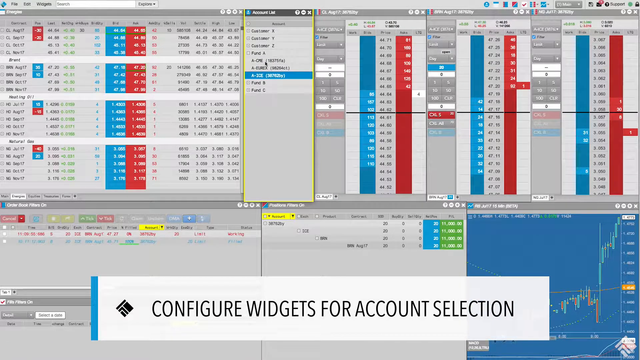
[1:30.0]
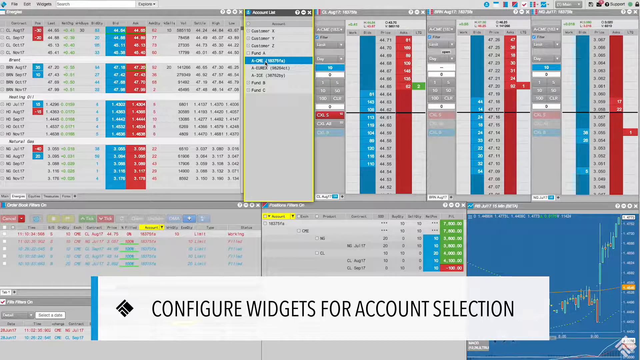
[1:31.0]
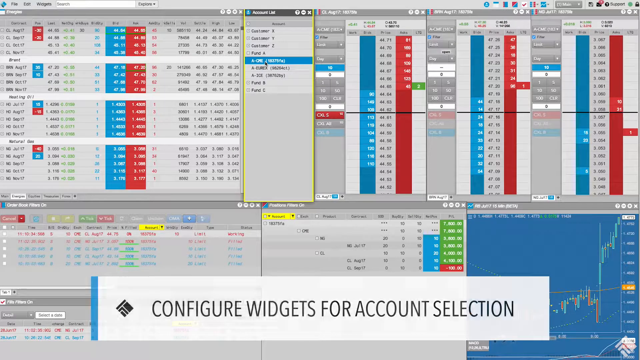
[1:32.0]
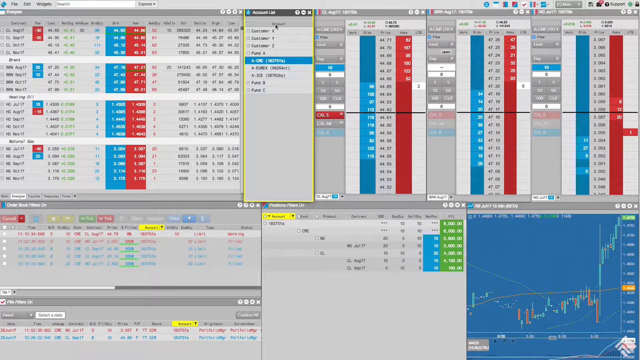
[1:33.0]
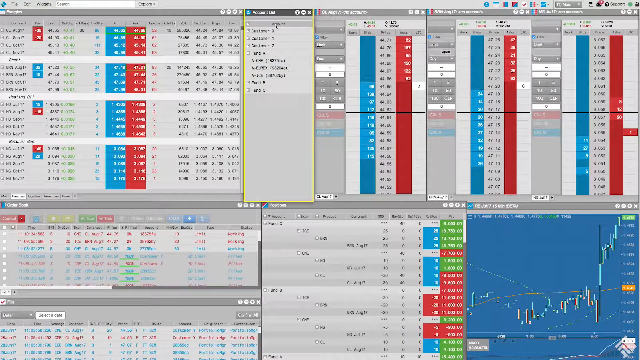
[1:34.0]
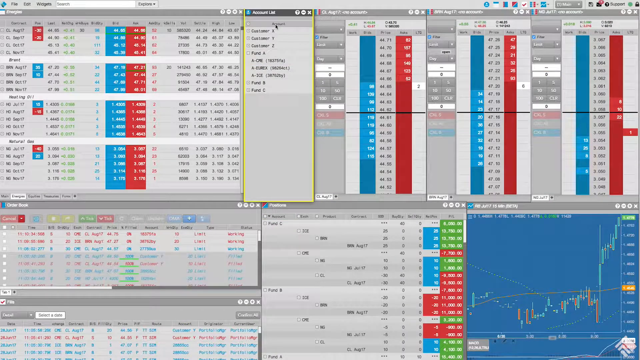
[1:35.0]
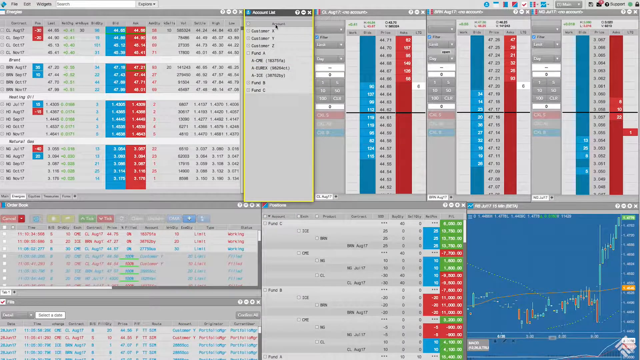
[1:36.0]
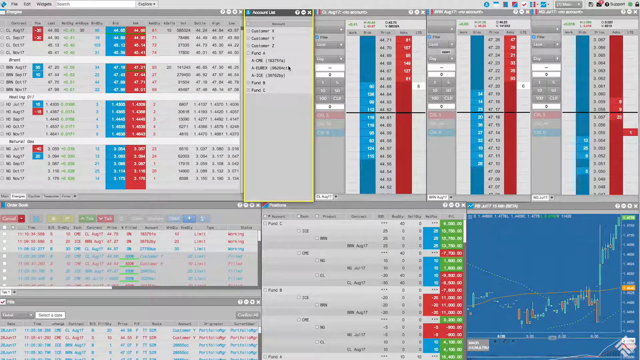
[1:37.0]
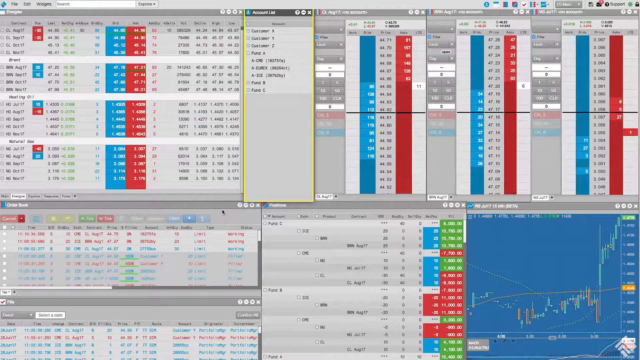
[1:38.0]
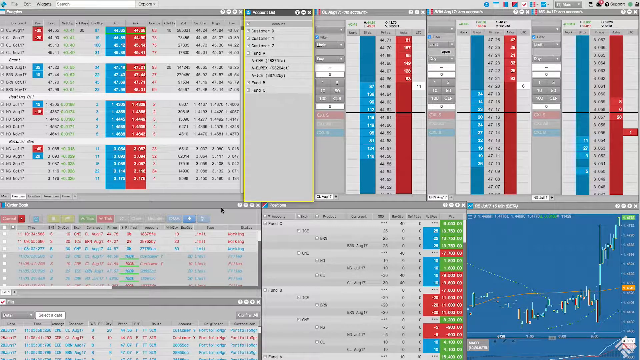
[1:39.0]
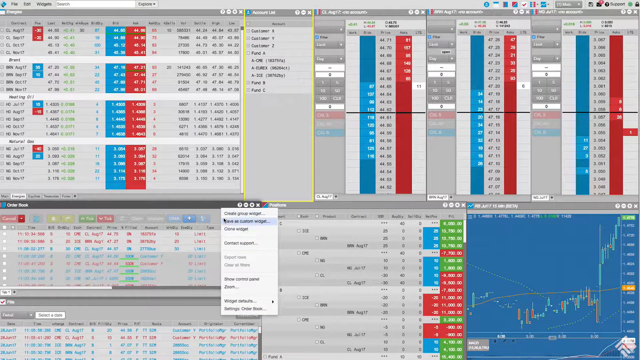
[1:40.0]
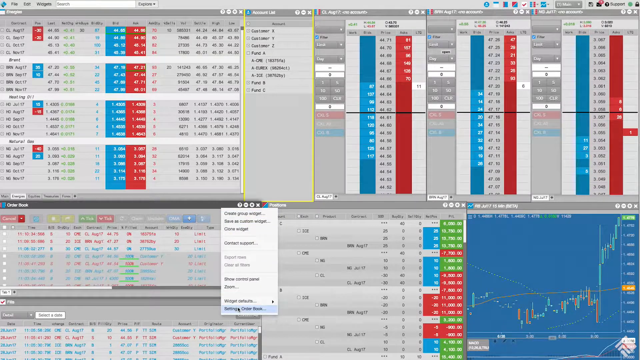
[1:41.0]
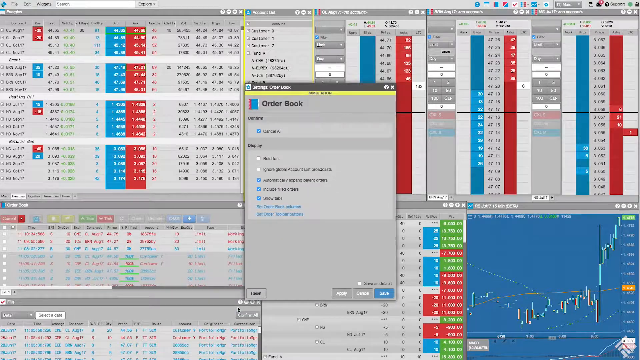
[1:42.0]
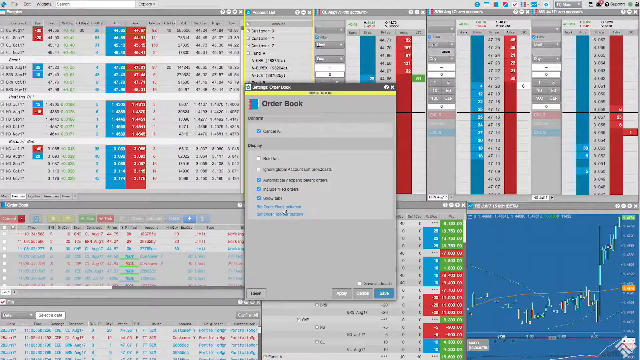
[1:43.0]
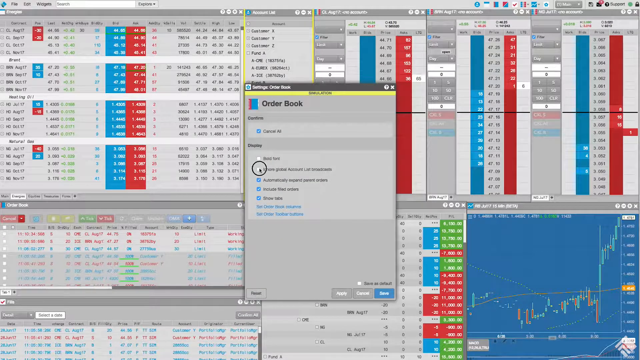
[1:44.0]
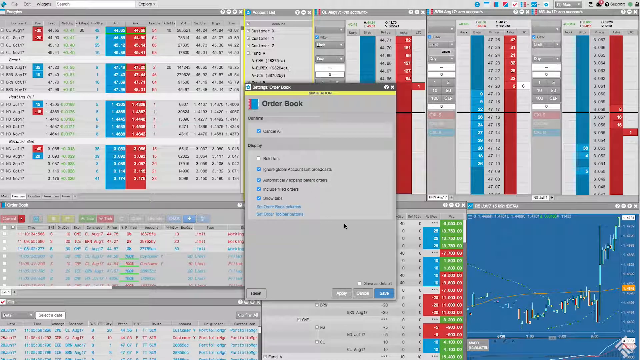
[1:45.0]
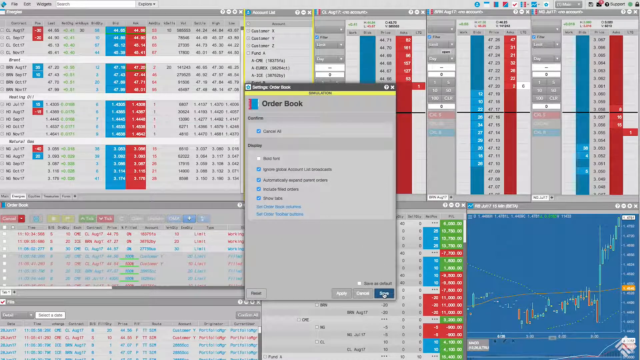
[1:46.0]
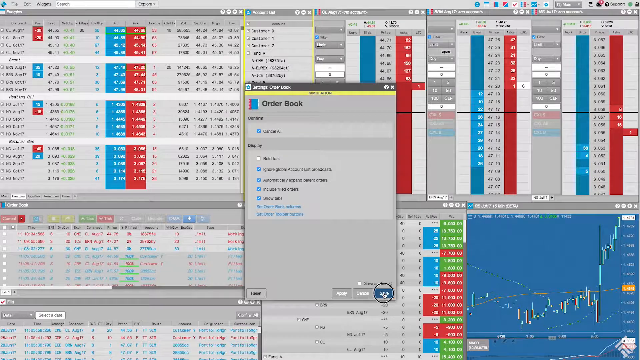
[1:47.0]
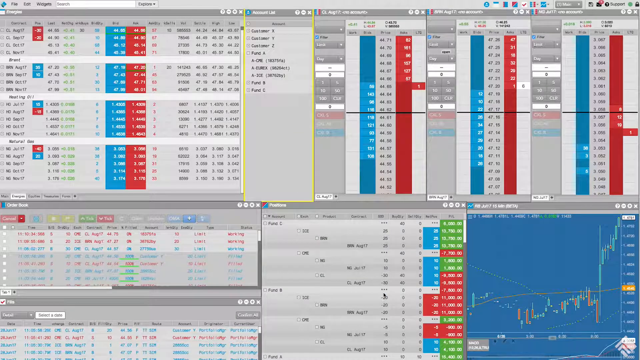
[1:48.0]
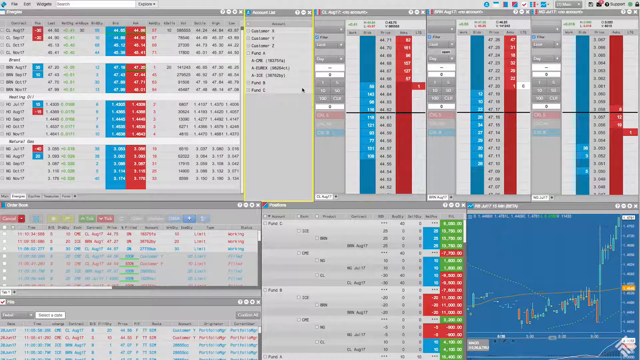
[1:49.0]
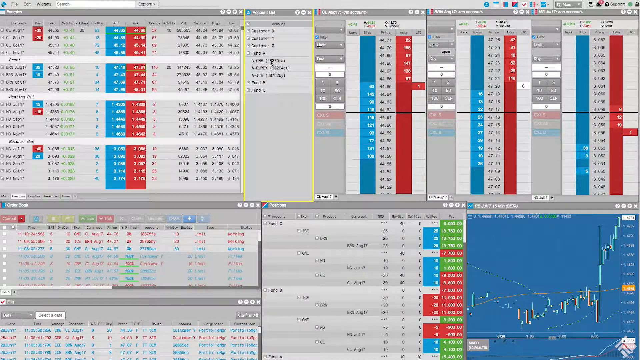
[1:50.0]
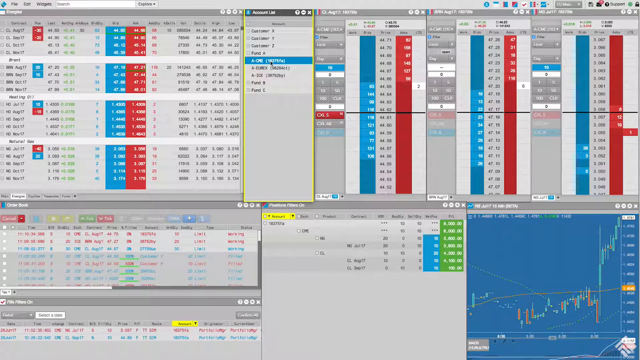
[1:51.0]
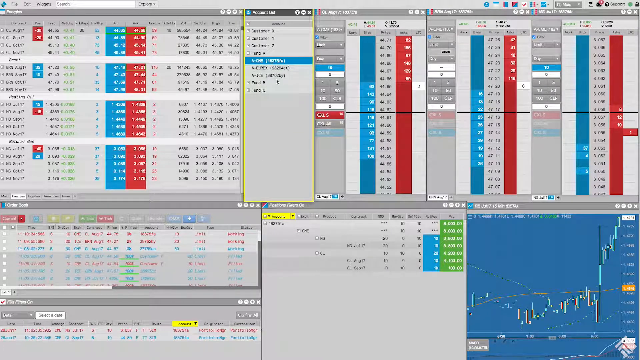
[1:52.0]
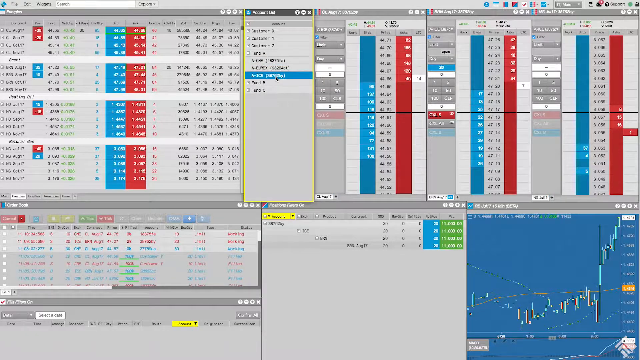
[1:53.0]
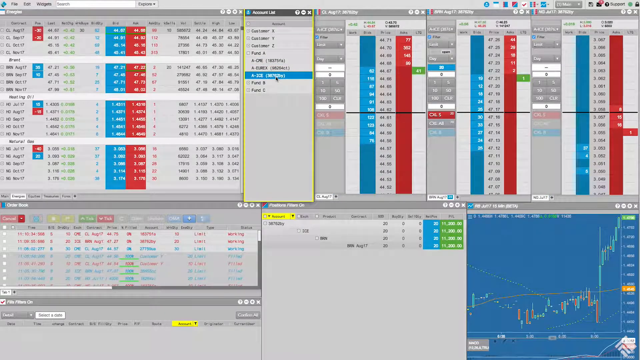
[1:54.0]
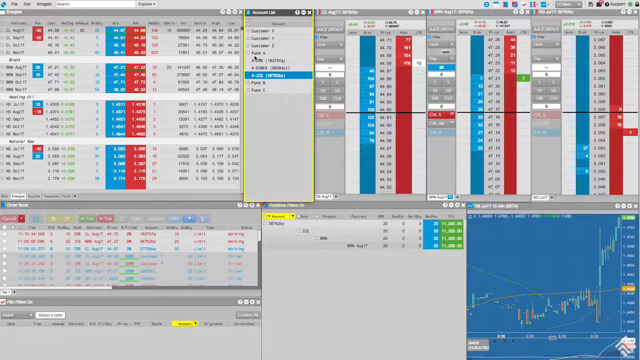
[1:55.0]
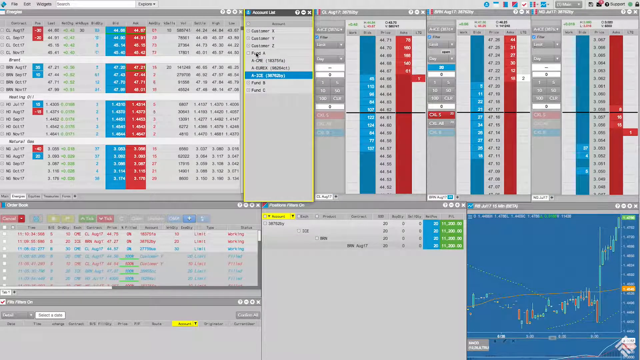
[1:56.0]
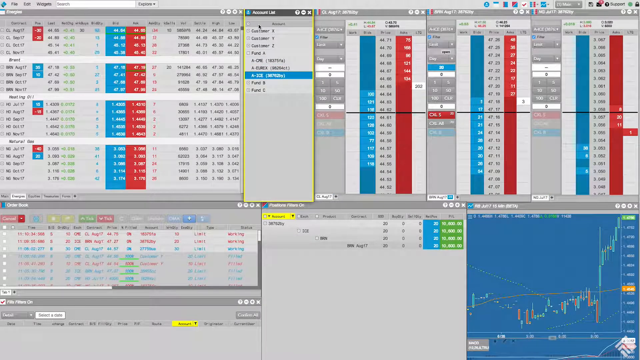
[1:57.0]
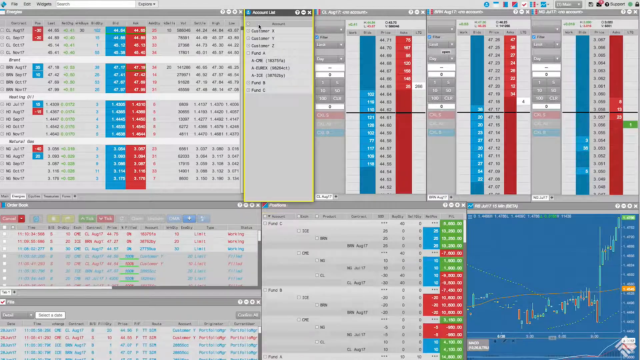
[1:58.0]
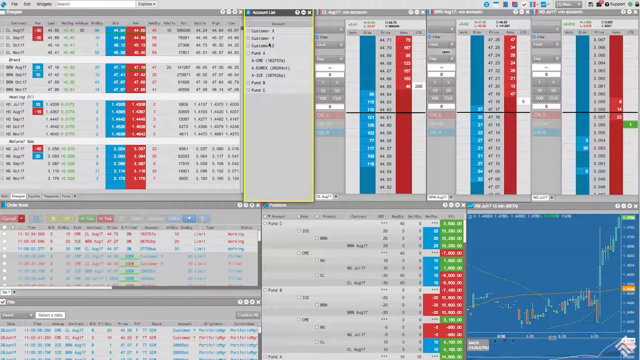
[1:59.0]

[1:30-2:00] A screen capture of someone's computer shows multiple windows open, apparently running the same sort of application, which appears to be some sort of financial or stock market app. Blue and red are prominently displayed, with multiple windows across the top. Across the bottom there are fewer bars, in the same colors of blue, green, and red. In the middle at the top, a smaller rectangular window is open. The user selects an option from that menu, and multiple windows on the screen change: numbers change and more windows expand in the lower boxes. He then opens another box that says "order book," clicks something there, and that window disappears. He goes back up to the smaller rectangular box at the top and clicks the second-from-last option. A few things change in the windows across the top, with not much change at the bottom.